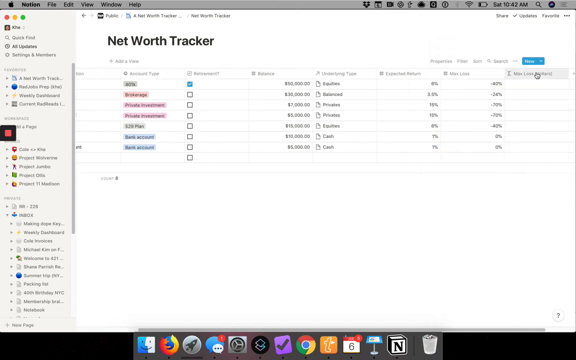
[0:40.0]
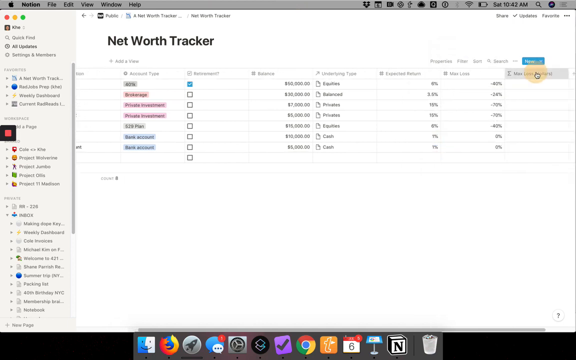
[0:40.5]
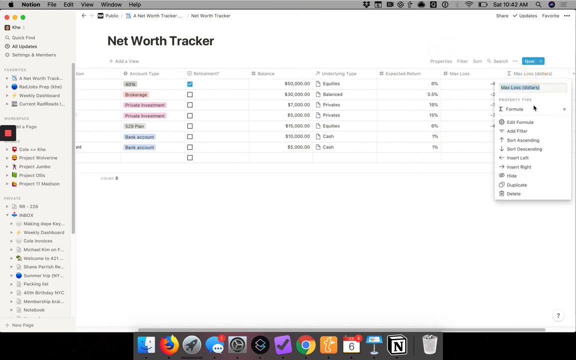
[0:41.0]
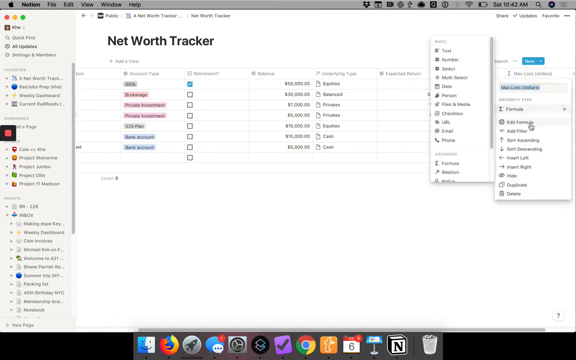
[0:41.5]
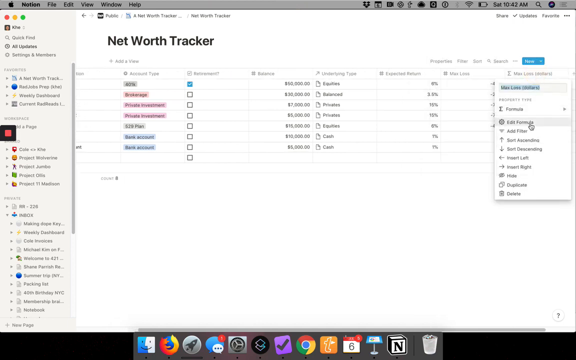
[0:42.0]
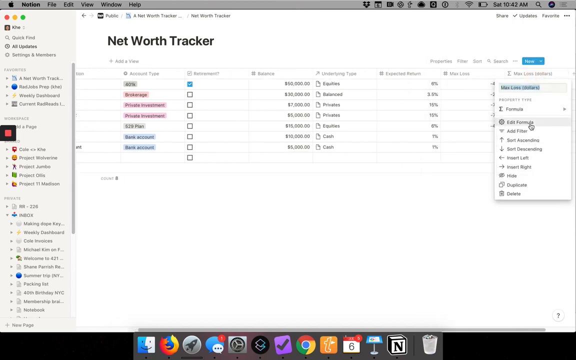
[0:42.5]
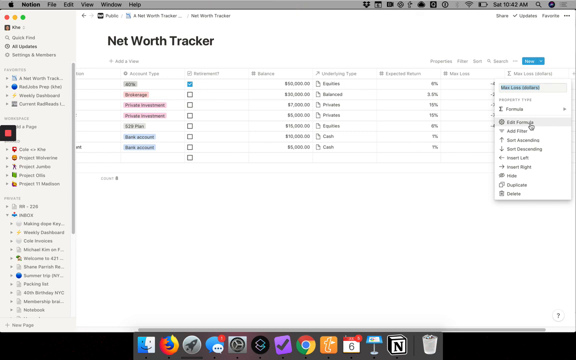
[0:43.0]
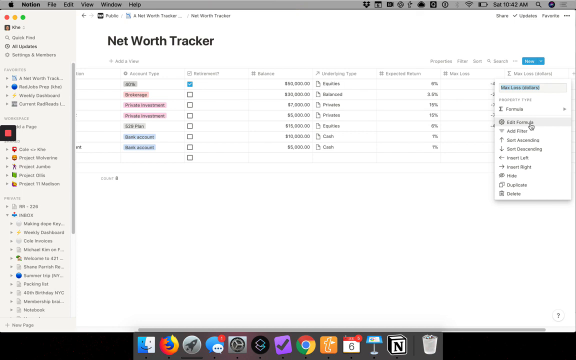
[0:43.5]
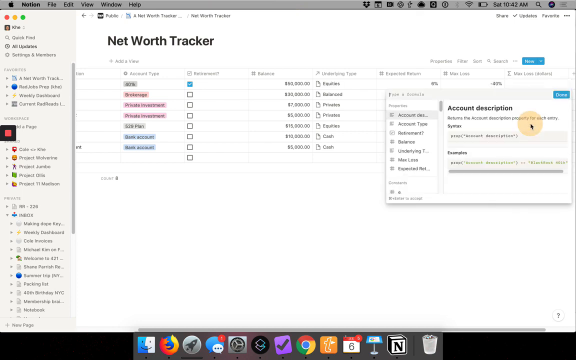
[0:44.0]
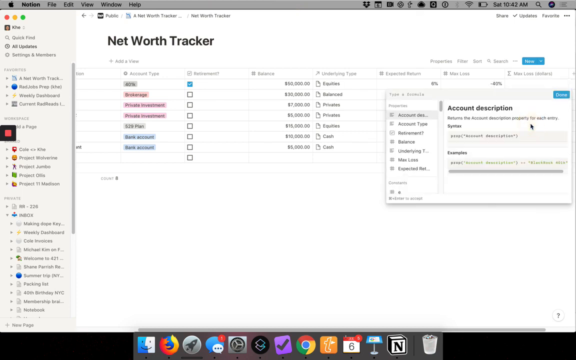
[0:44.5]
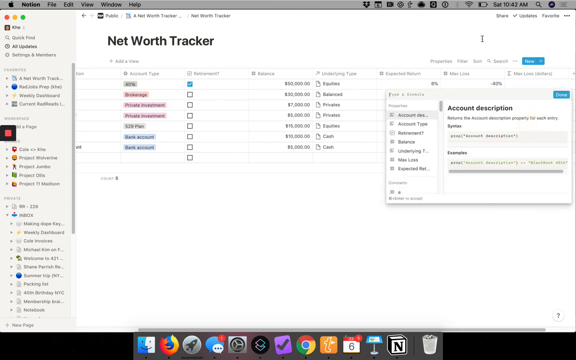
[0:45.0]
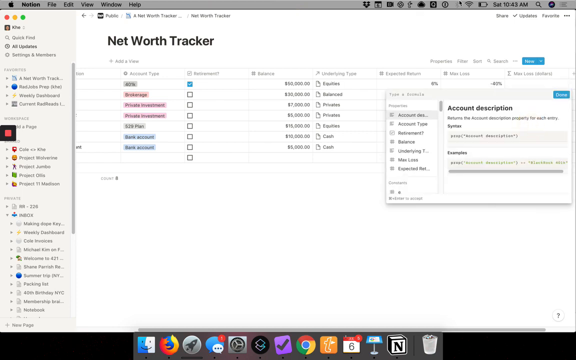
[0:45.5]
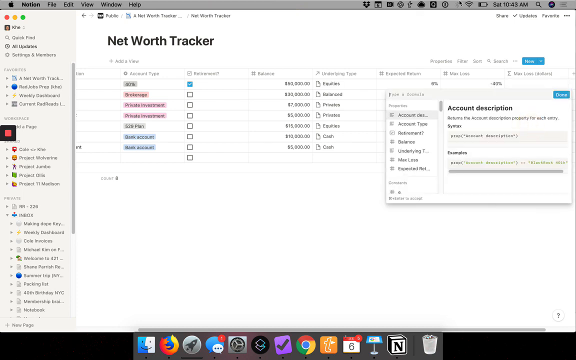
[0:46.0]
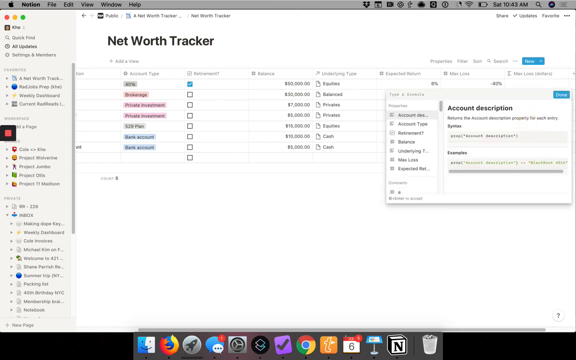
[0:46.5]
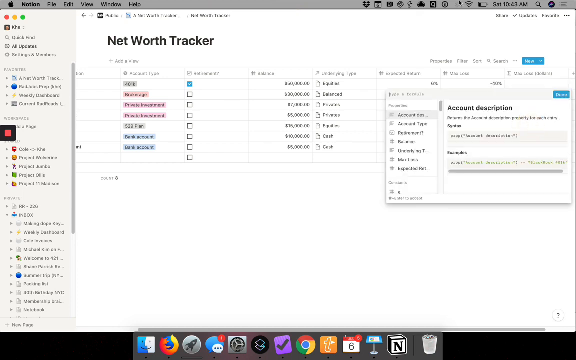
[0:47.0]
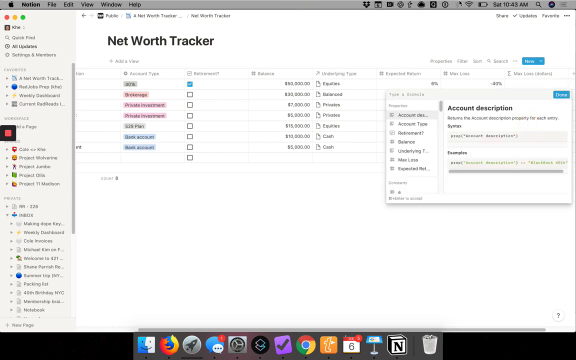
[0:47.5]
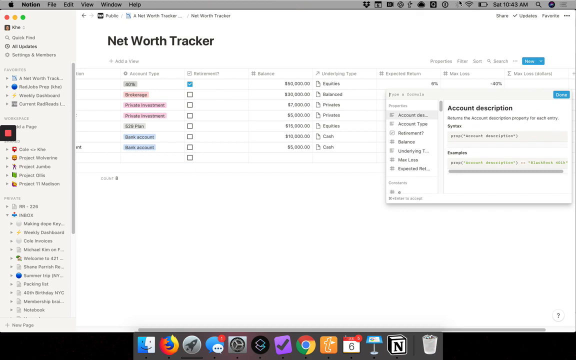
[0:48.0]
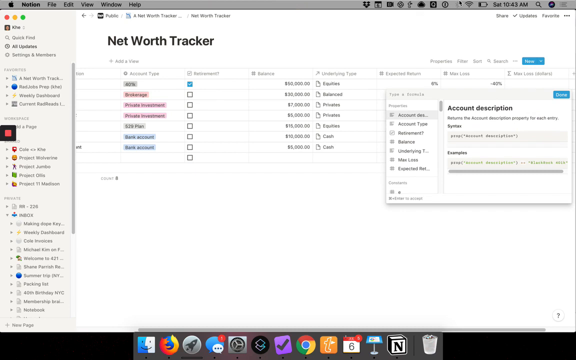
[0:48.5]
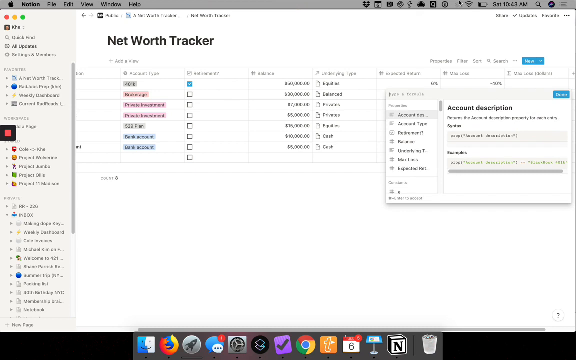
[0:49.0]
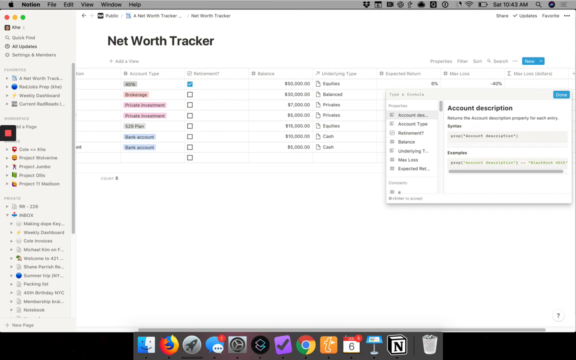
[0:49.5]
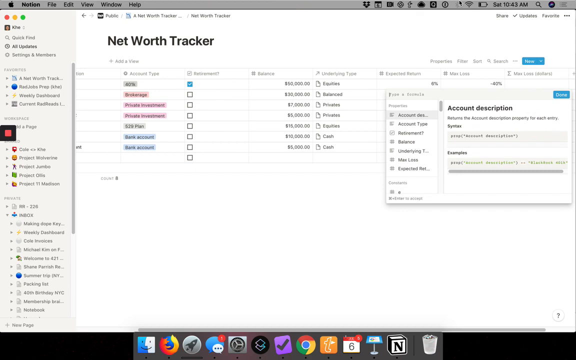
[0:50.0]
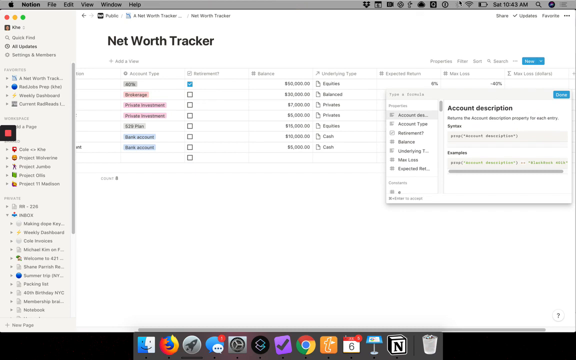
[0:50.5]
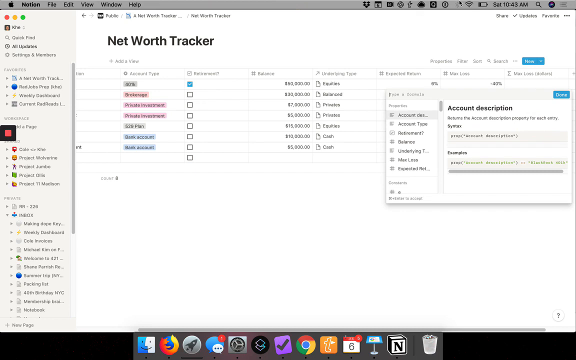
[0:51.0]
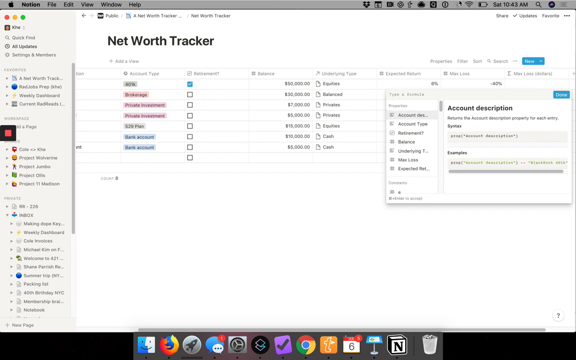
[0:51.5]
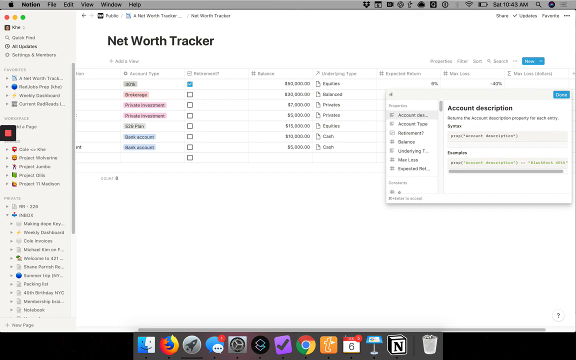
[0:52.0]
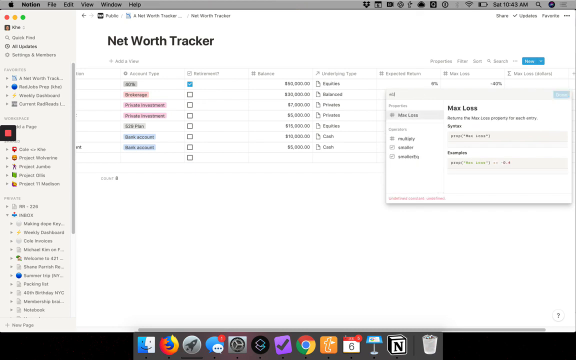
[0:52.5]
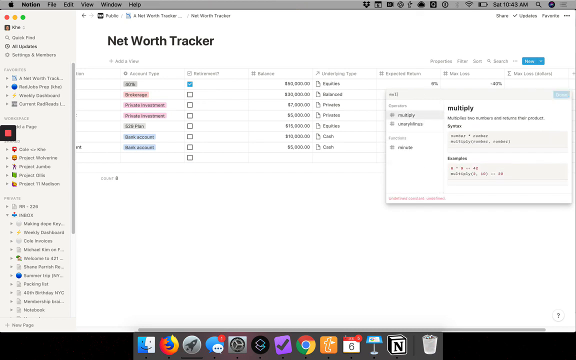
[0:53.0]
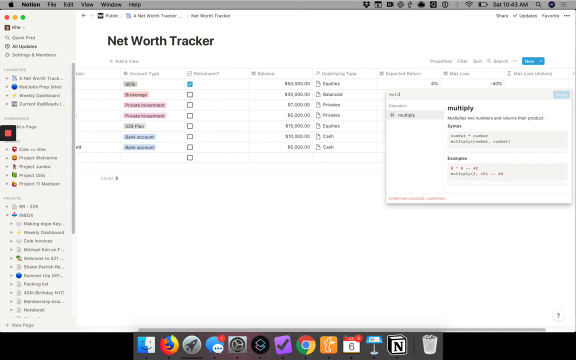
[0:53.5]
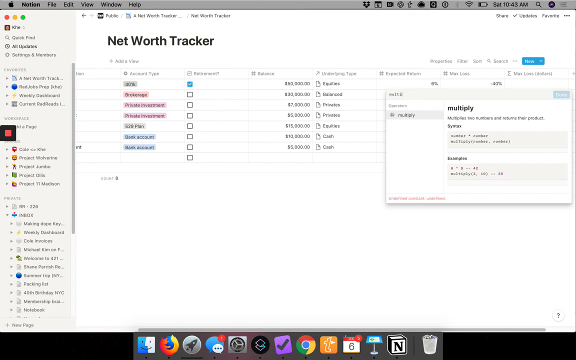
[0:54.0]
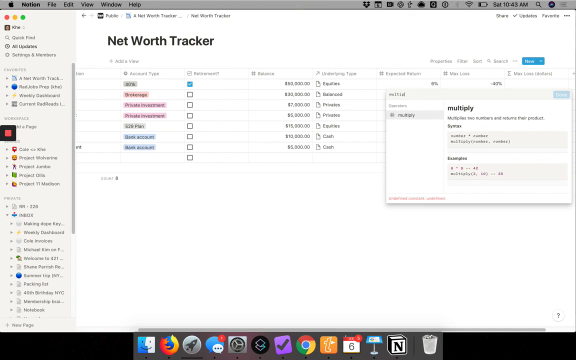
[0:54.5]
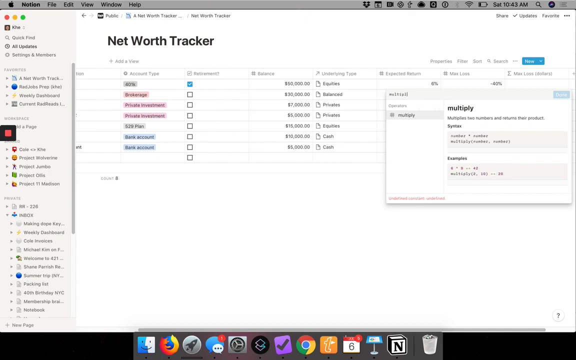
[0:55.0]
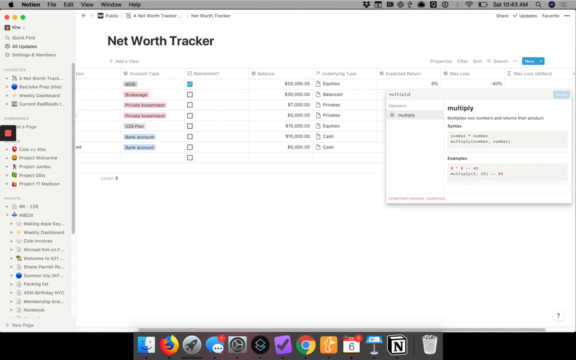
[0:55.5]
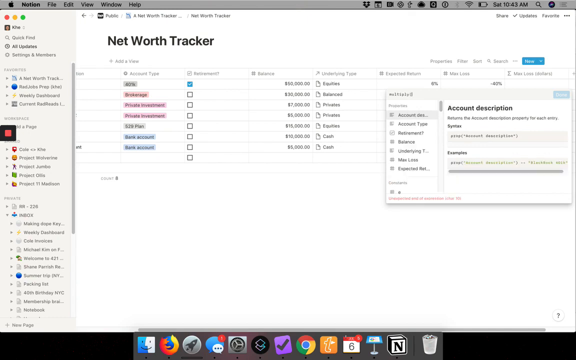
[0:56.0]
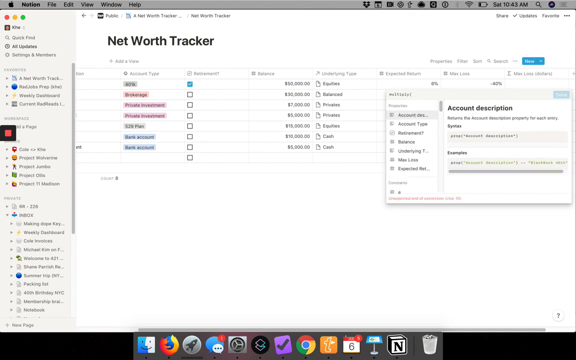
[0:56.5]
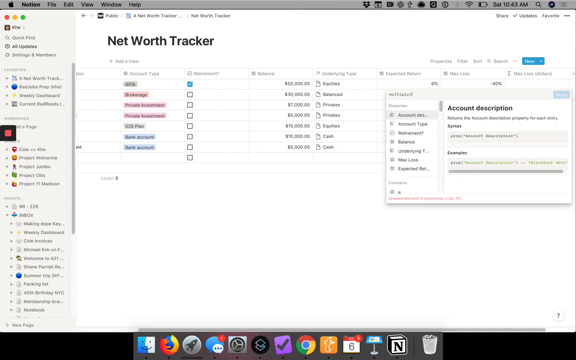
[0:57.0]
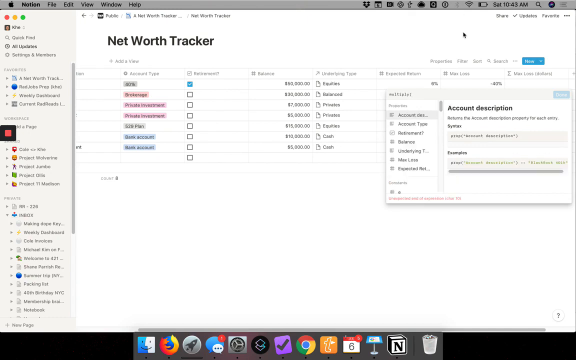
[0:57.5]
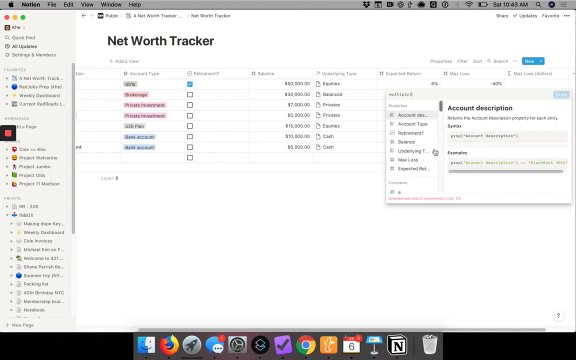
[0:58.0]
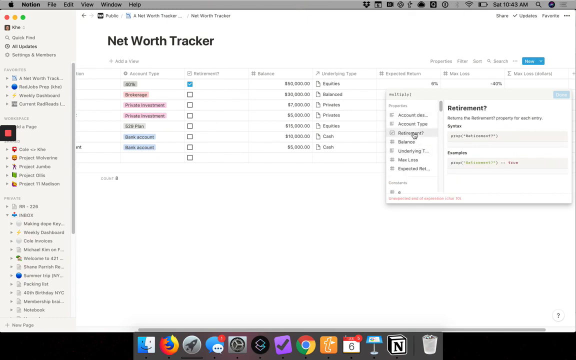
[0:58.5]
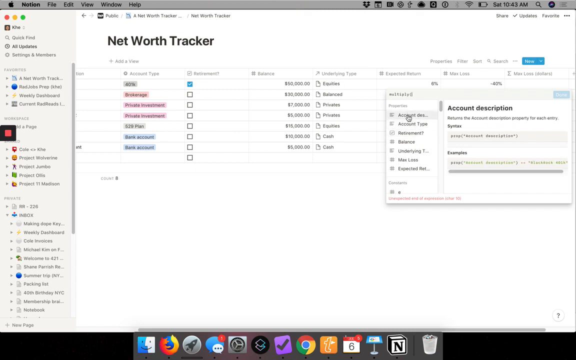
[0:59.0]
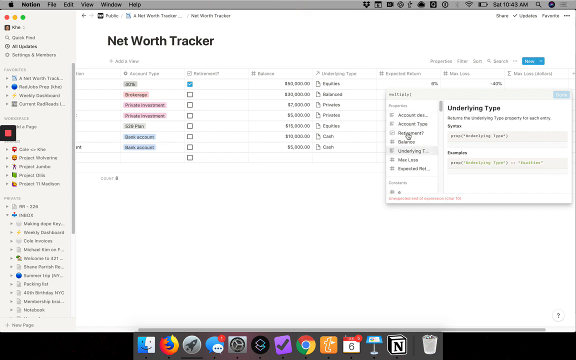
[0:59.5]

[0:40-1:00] A computer page is shown on an Apple computer. A very thin gray bar at the top shows the time and date, and the far left corner at the top has the Apple logo. The main part of the page has a white backdrop reading "Net Worth Tracker," with about six or seven lines. Words are typed on the page but are not readable; they are highlighted, some blue and some pink, with checkmark boxes to their right. A mouse pointer on the far right part of the page clicks on a word, which turns blue, then scrolls down and picks another word. Another box pops up that says "Account Description" and contains many words. The mouse disappears off the page for a second and comes back, and typing takes place in the box. A word is typed out, then the mouse goes down and selects a word that appeared on the screen after the typing.